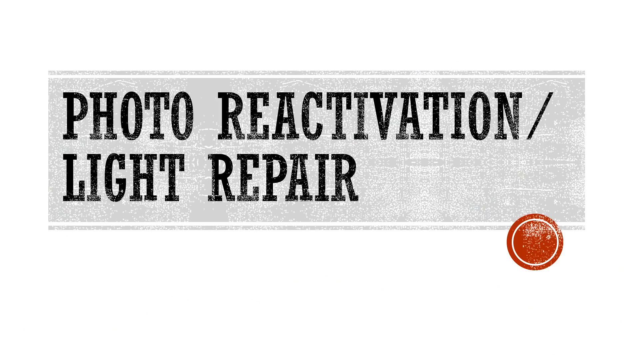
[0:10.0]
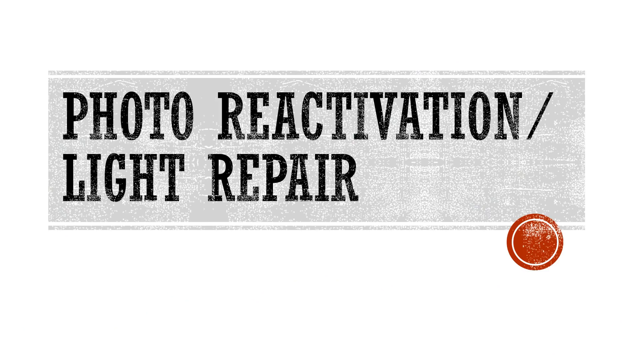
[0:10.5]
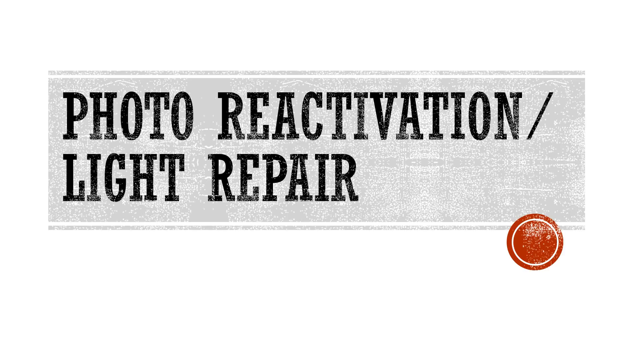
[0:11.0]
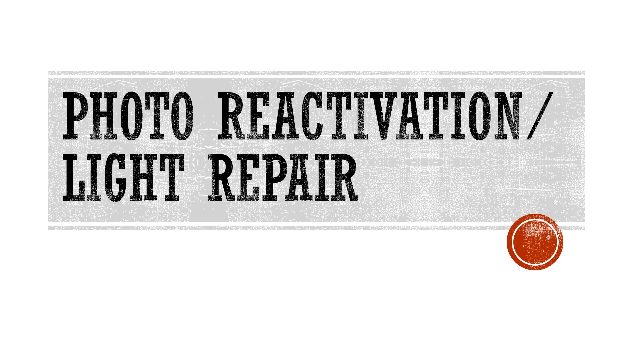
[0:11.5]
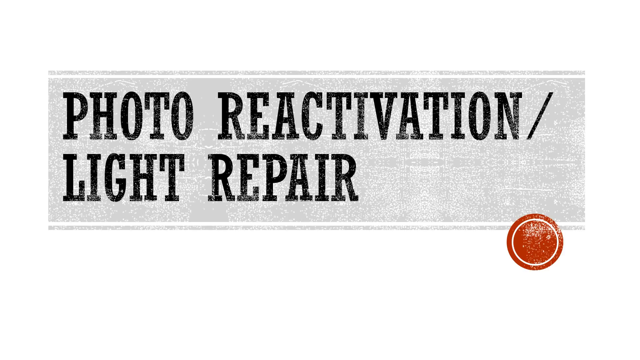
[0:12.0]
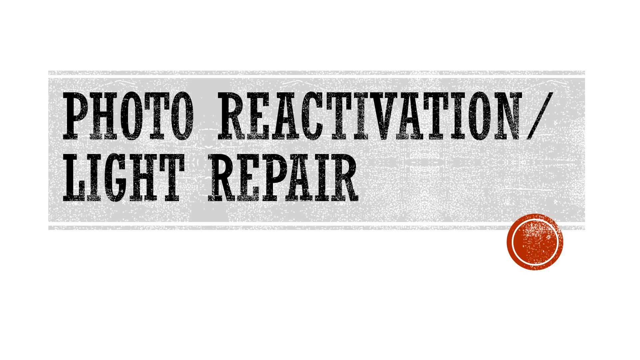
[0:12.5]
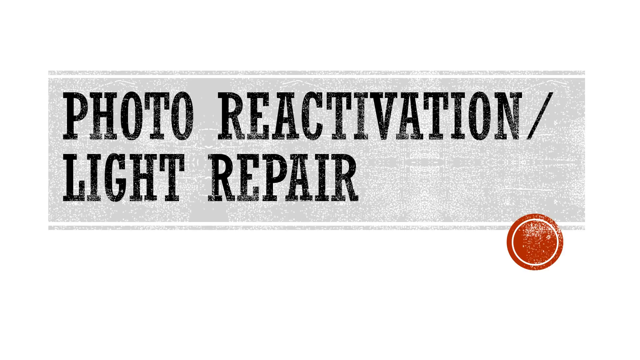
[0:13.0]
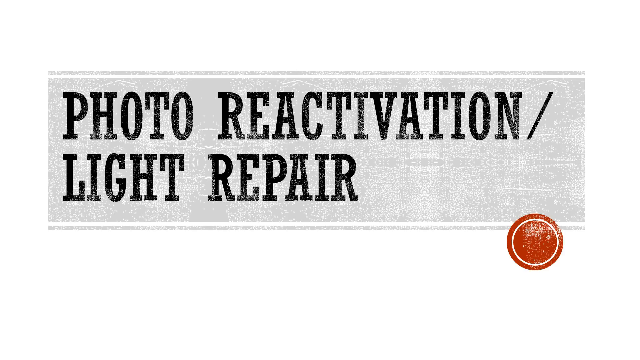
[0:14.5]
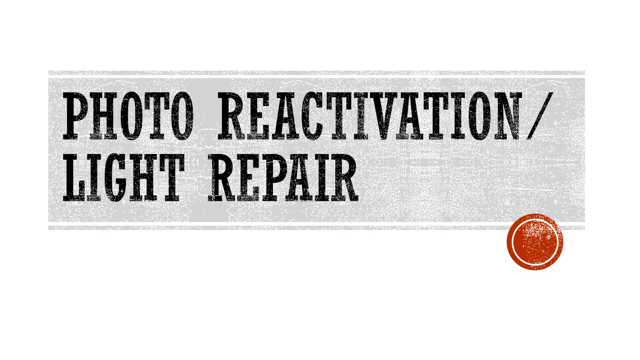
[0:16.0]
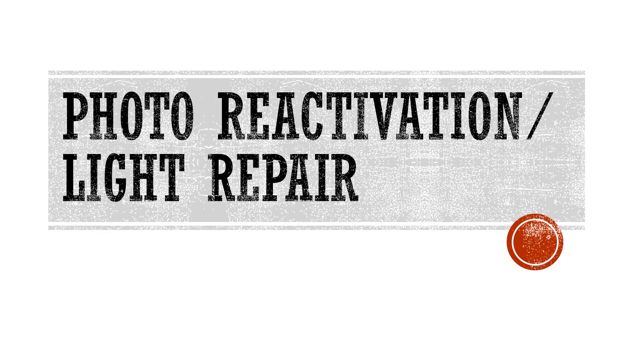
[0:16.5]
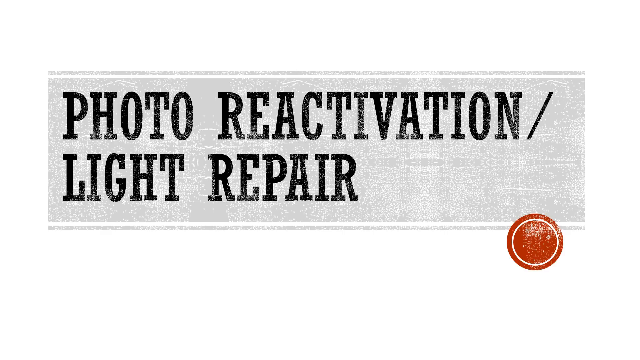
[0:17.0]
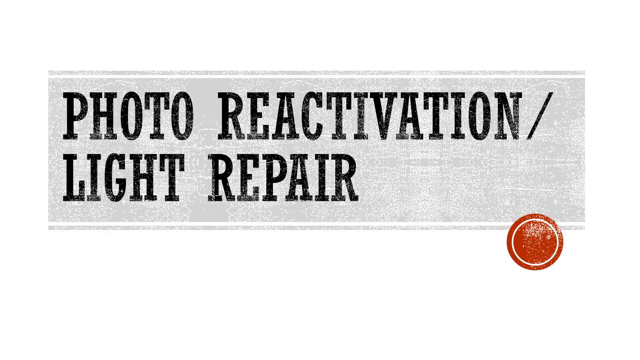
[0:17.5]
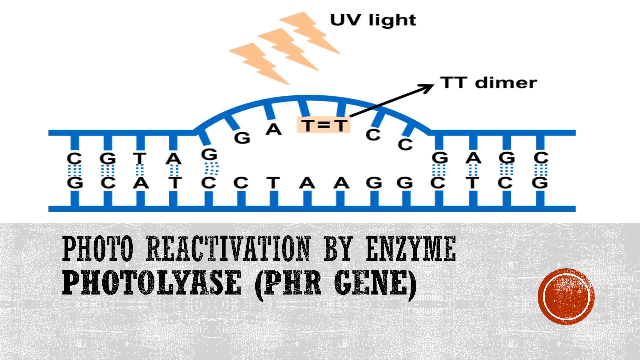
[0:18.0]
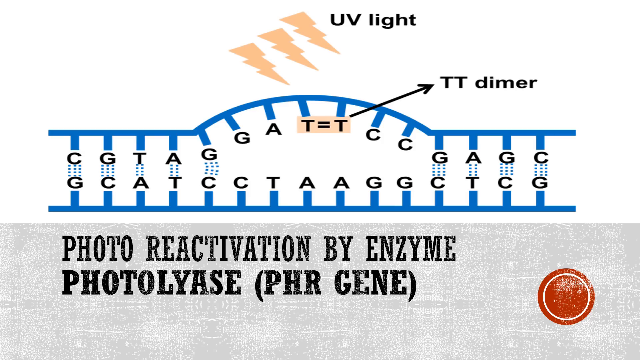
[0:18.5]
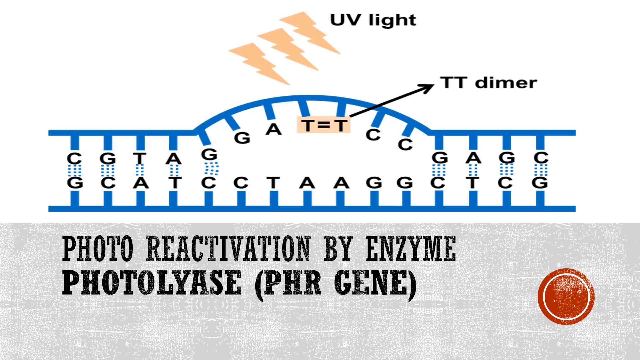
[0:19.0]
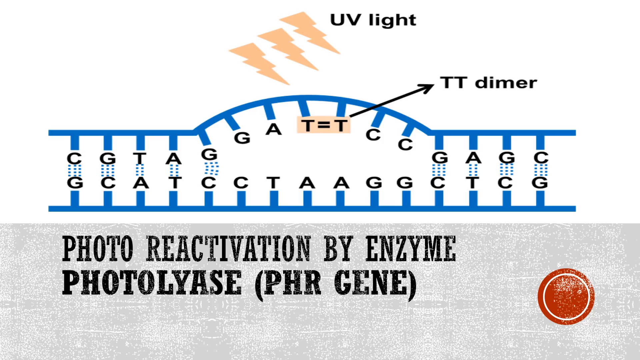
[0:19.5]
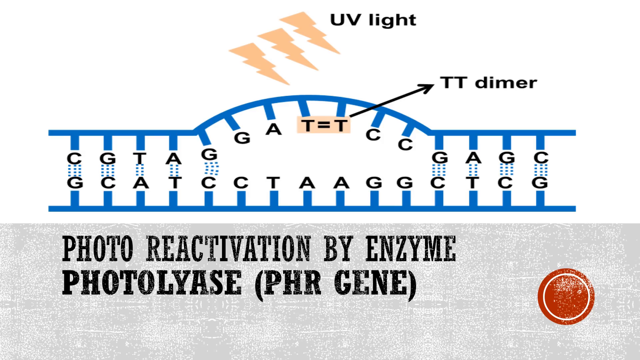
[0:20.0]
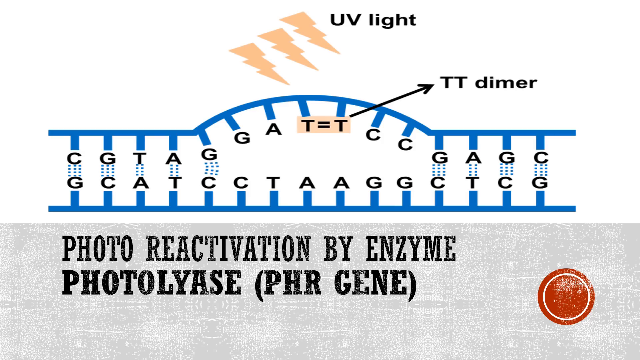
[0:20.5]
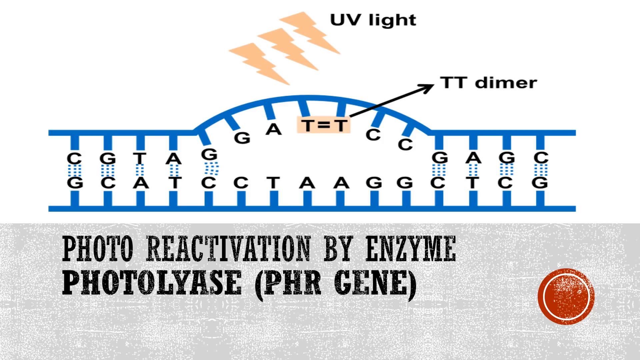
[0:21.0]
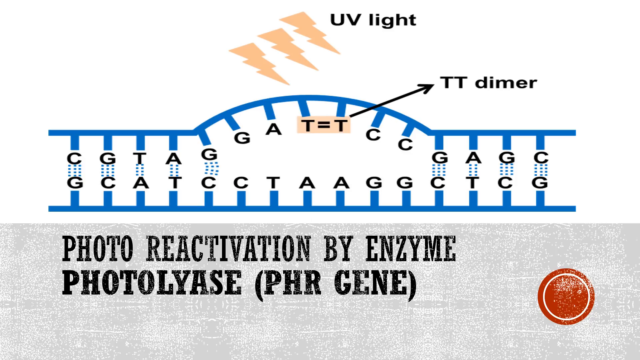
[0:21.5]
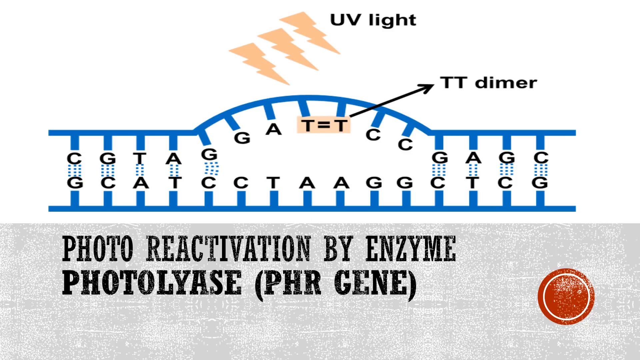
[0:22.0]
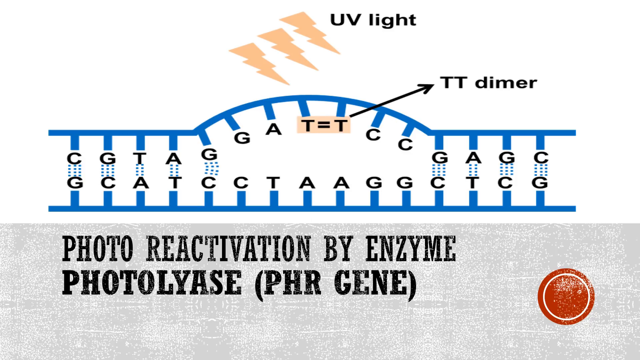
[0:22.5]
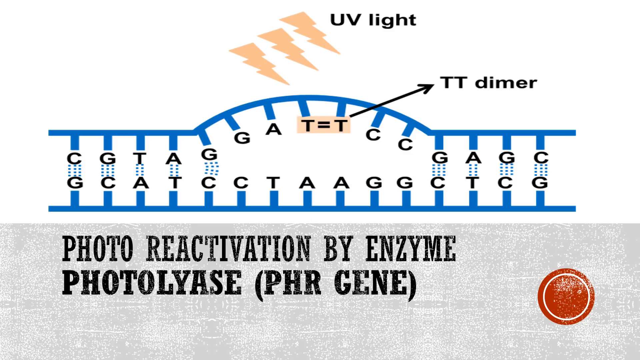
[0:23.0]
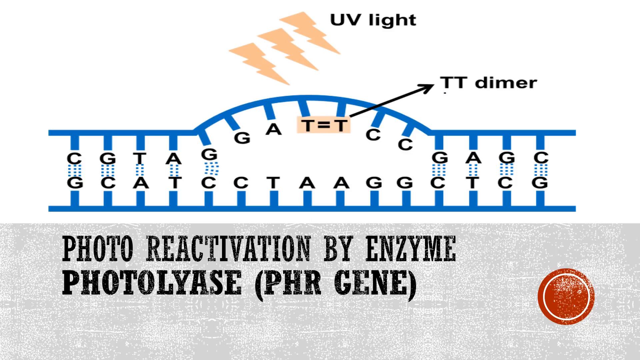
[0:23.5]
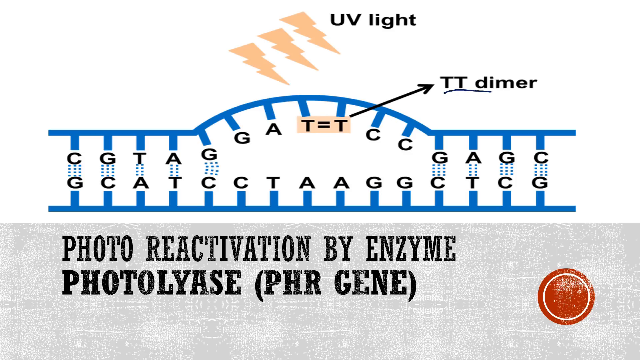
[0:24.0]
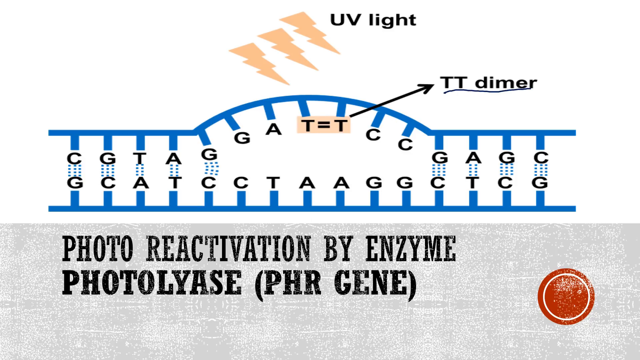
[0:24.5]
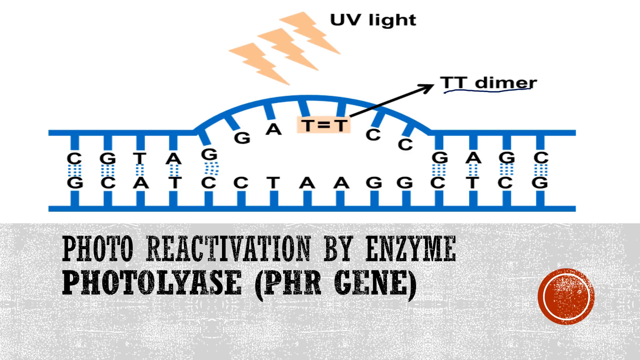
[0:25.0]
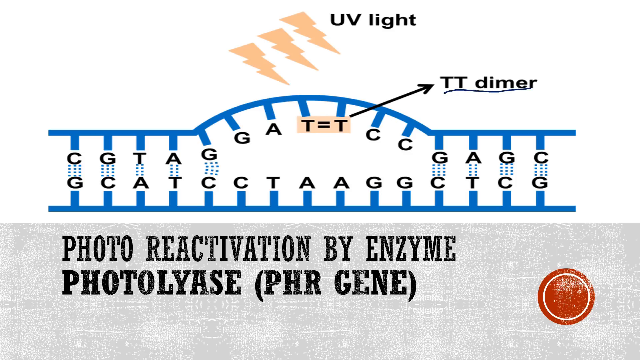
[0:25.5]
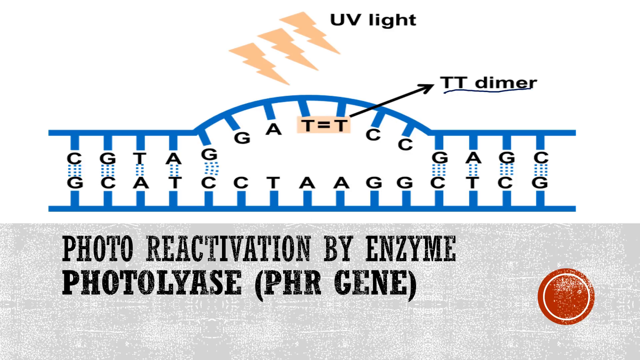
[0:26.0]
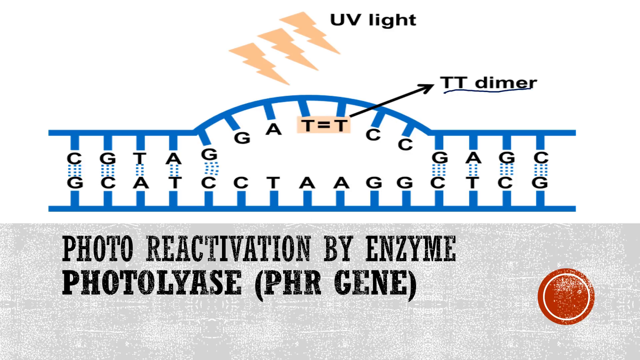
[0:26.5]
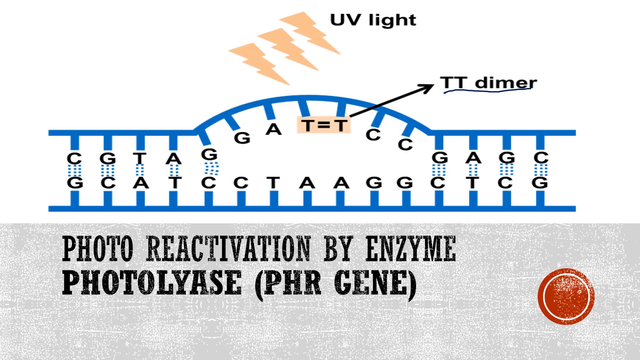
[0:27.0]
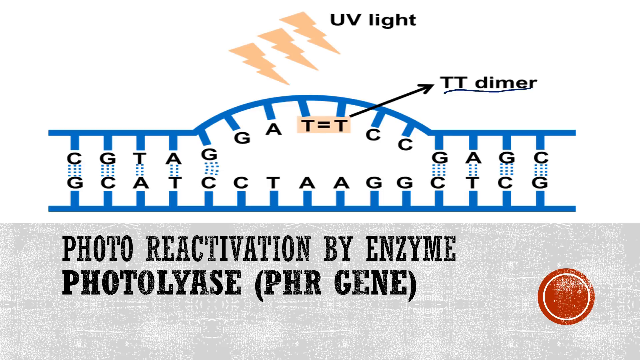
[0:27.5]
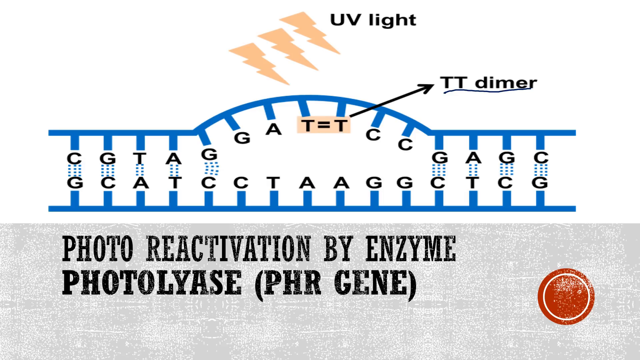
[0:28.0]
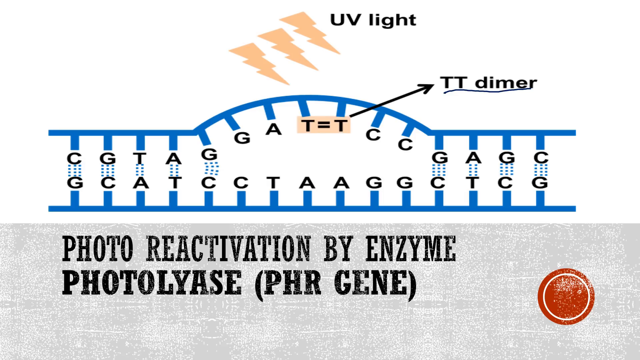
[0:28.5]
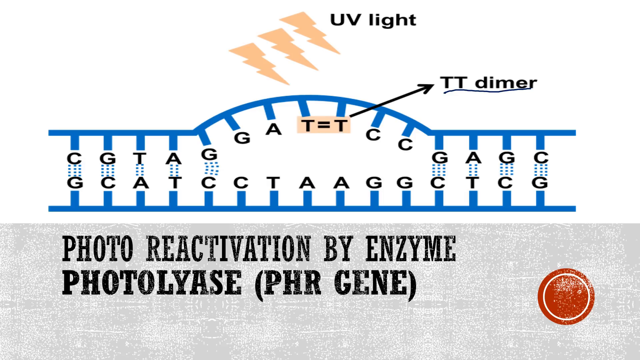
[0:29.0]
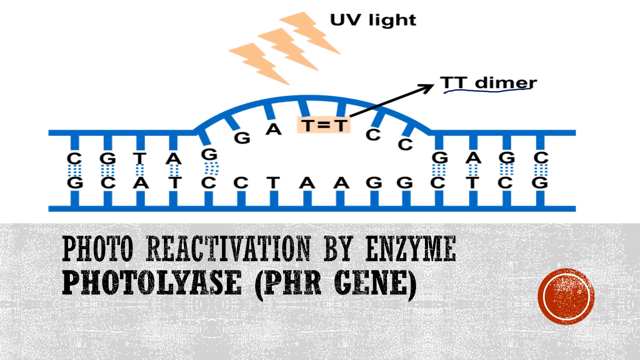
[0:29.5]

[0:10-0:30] Text is shown on the screen explaining how UV light can cause a thymine dimer and how photoreactivation by an enzyme can repair it. The image includes a red dot and black areas against a gray background.